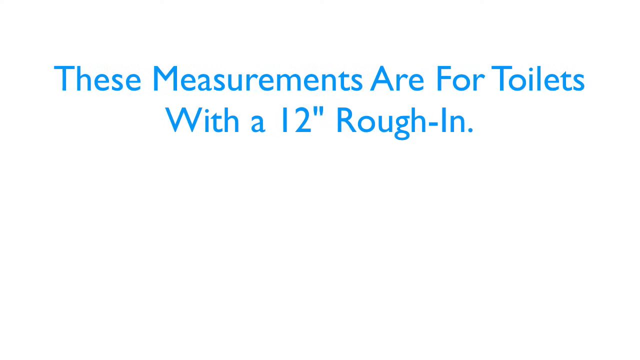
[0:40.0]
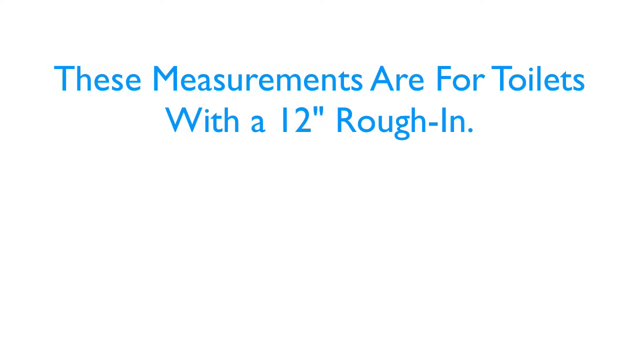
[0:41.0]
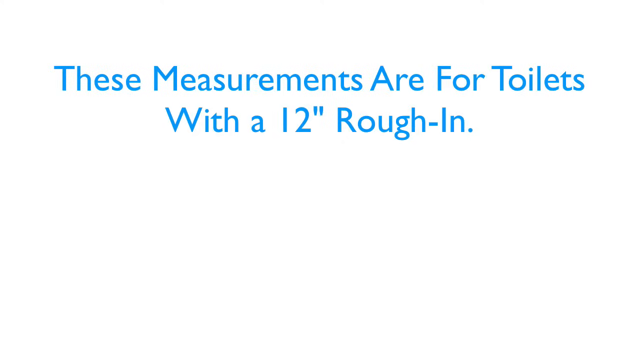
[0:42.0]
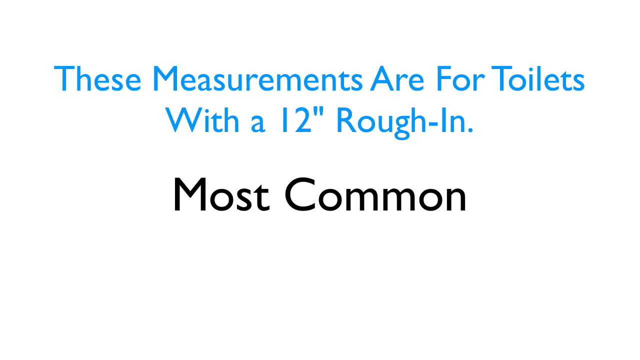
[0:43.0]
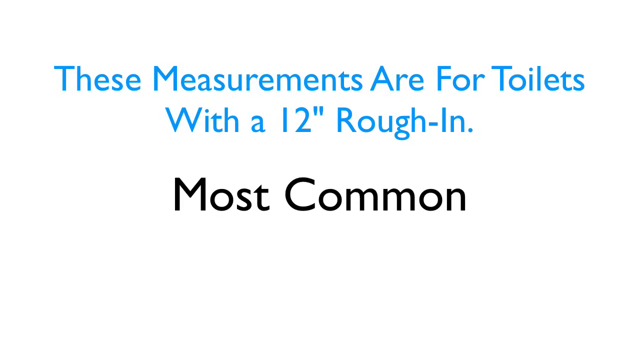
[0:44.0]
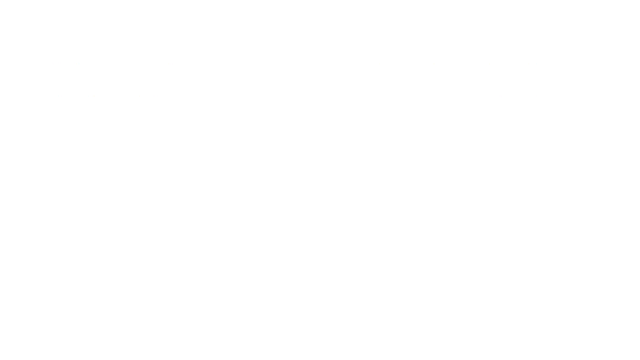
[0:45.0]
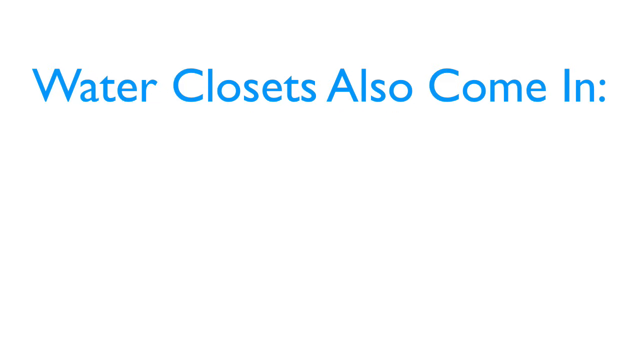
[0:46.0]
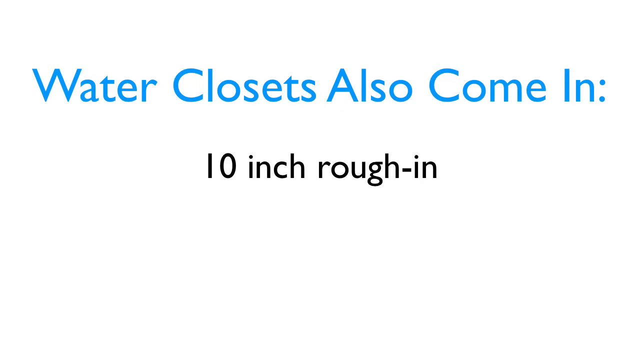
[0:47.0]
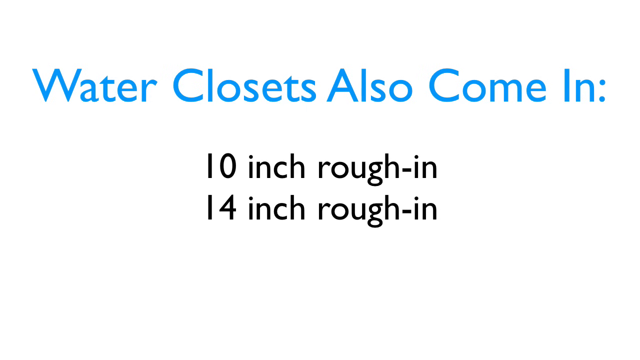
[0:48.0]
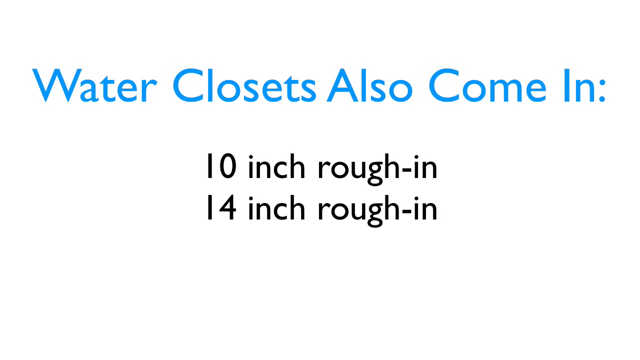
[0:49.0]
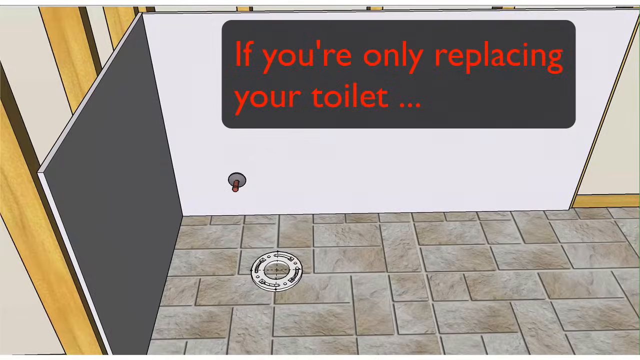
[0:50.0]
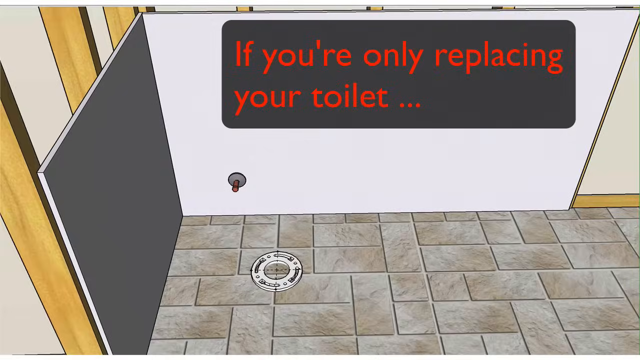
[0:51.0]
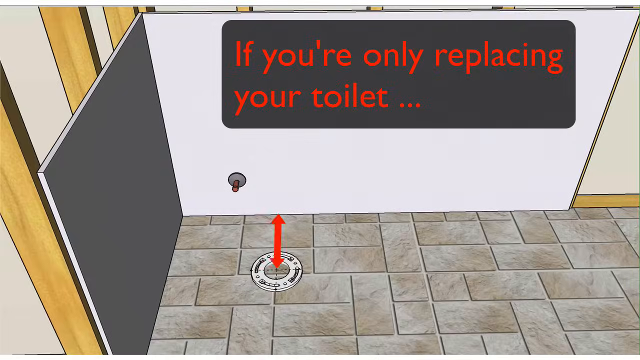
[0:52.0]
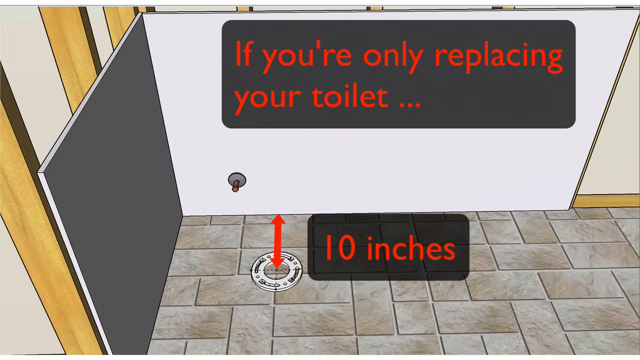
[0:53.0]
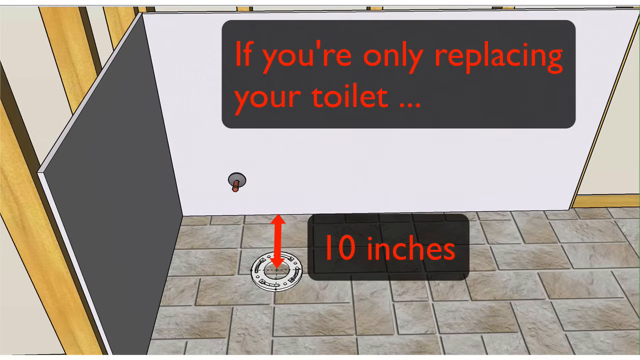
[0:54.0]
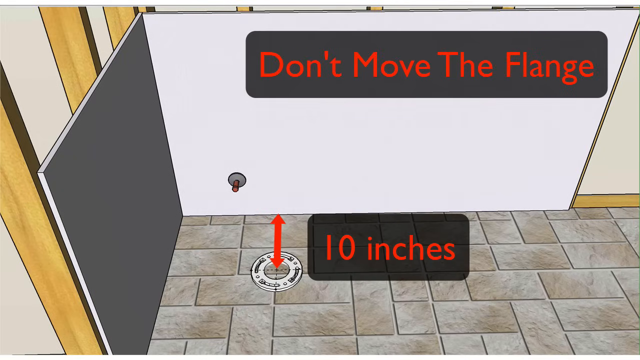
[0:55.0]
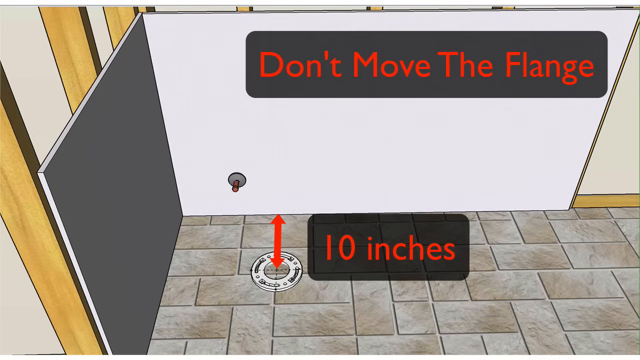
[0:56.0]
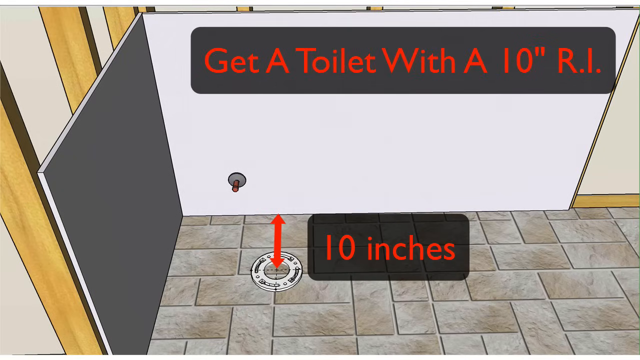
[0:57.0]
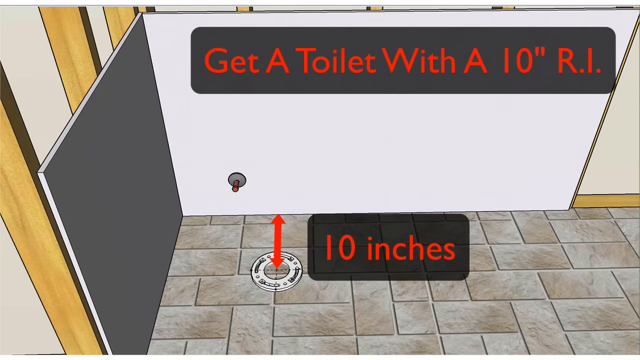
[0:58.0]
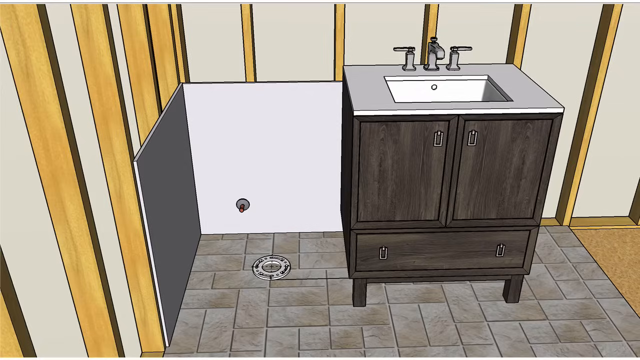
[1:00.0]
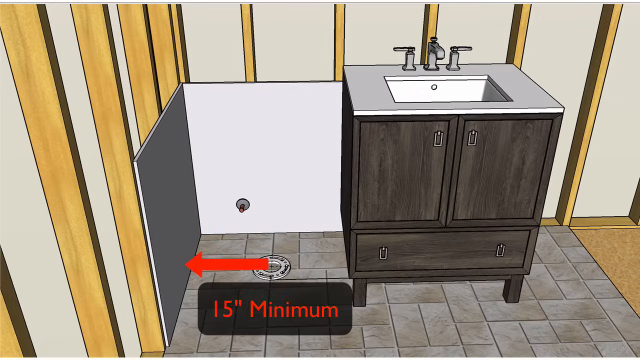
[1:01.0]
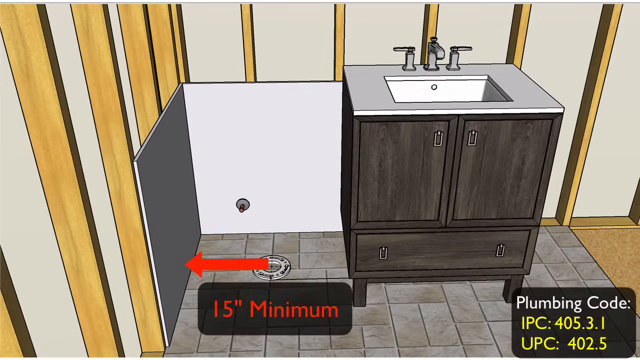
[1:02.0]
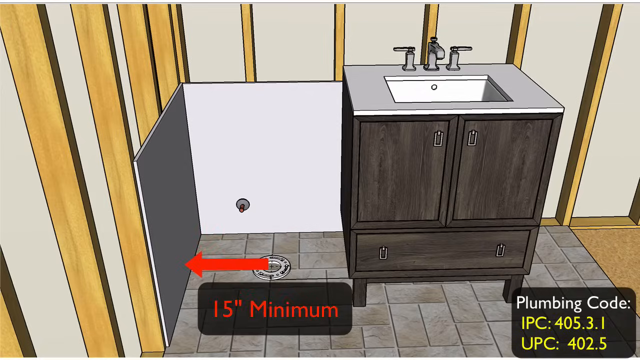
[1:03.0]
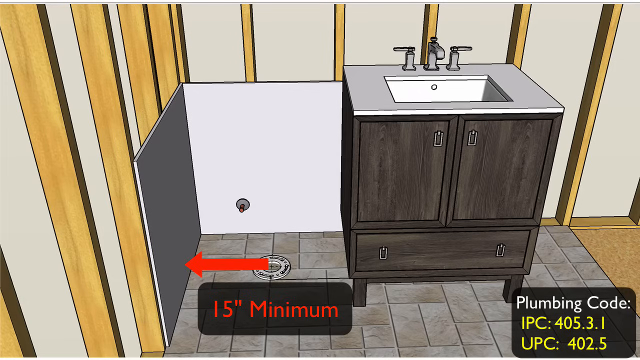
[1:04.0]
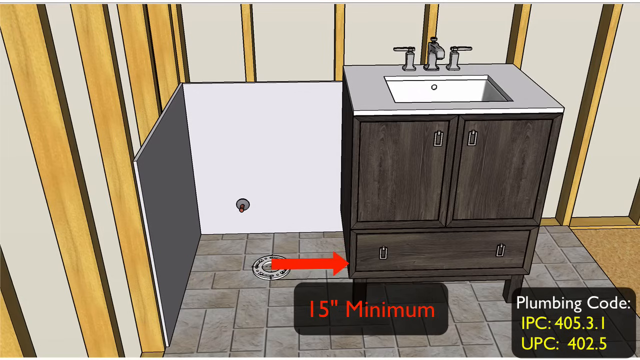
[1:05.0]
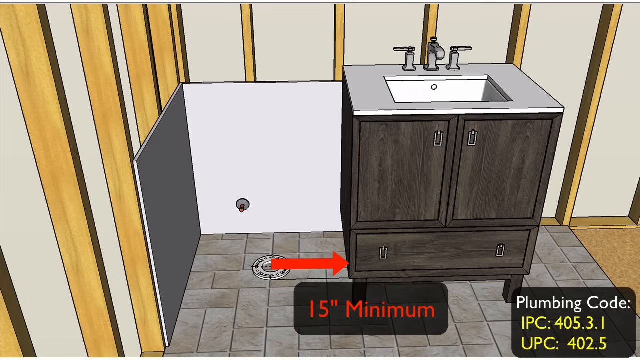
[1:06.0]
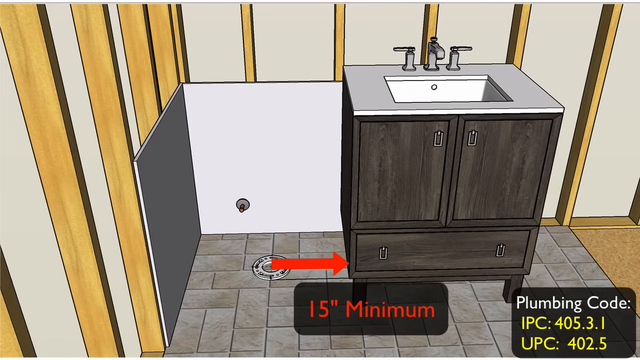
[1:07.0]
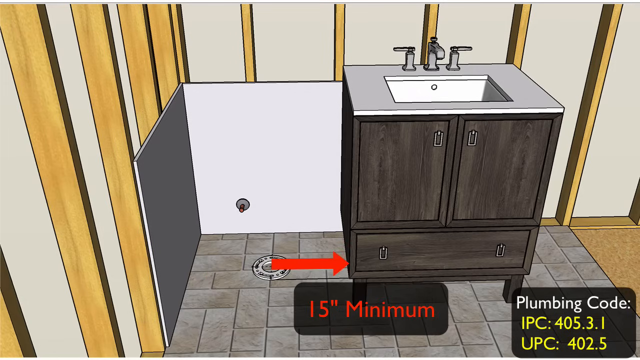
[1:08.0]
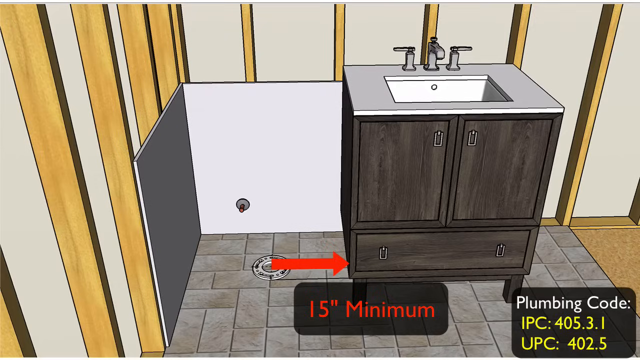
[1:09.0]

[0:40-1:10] Blue text on a white background reads "These measurements are for toilets with a 12'' rough-in", and then the text "Most Common" appears at the centre of the screen. Another set of text on a white background follows, with three phrases appearing in succession: "Water closets also come in", "10 inch rough-in" and "14 inch rough-in". Red text on a dark grey background then reads "If you're only replacing your toilet ..." A red double arrow appears on a drain on the floor, with "10 inches" beside it on a transparent dark grey background. The text at the top is replaced by "Don't move the flange", which is in turn replaced by "Get a toilet with a 10'' R.I." The scene transitions to what looks like the sink part of the toilet with faucets, and a red arrow runs from the drain on the tiled floor to the grey part of the wall. The text "15'' minimum" appears in red below the arrow on a transparent dark grey background, and at the bottom right of the screen is text giving a plumbing code. The arrows then turn in the opposite direction, running from the sink on the floor to the cupboard the toilet sink is on, with "15'' minimum" below on a similar transparent background.